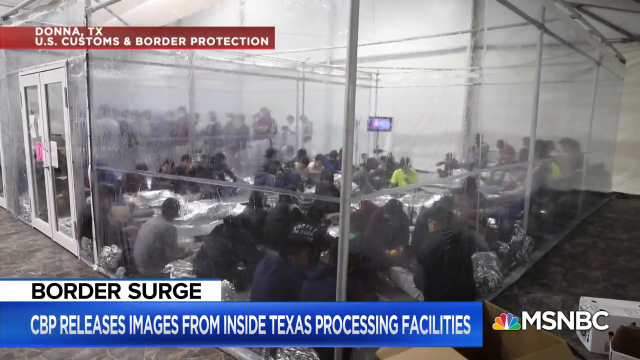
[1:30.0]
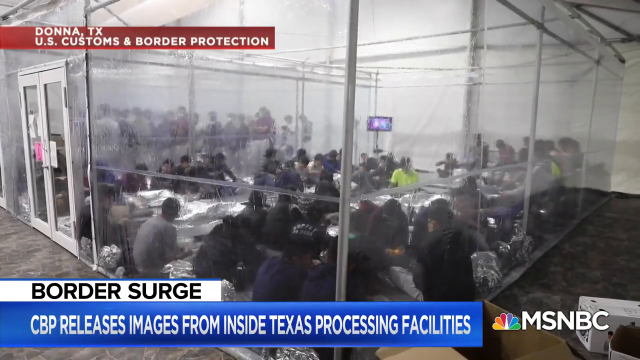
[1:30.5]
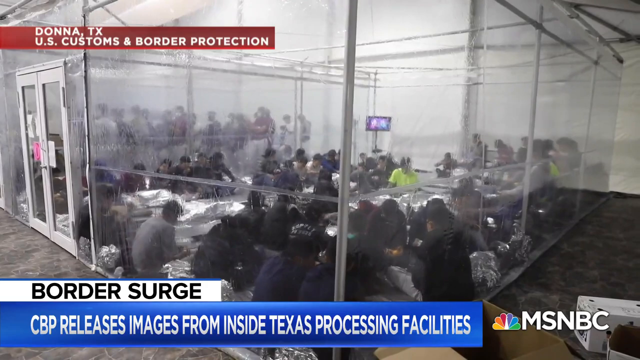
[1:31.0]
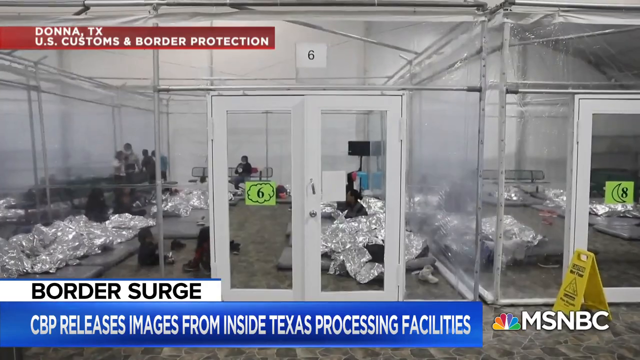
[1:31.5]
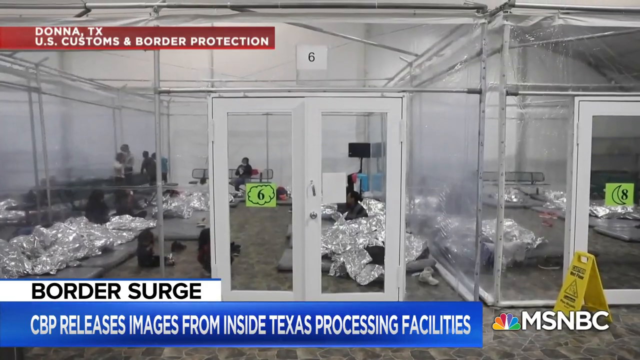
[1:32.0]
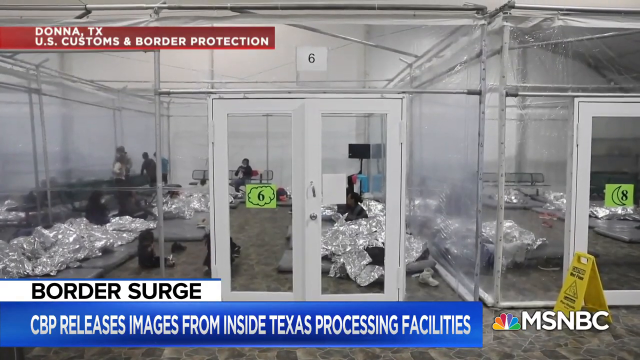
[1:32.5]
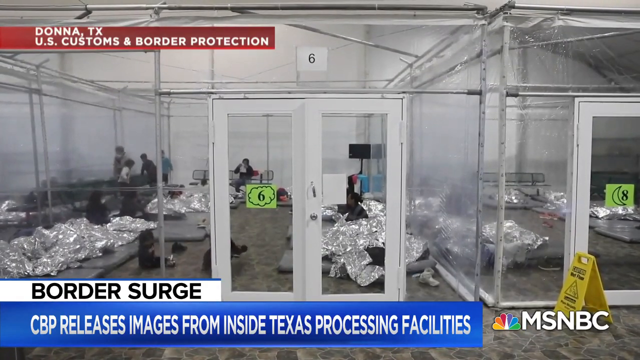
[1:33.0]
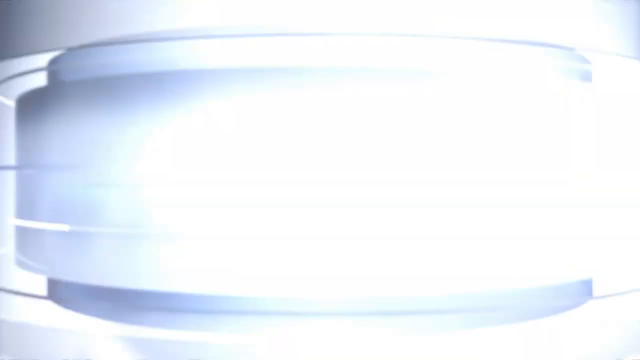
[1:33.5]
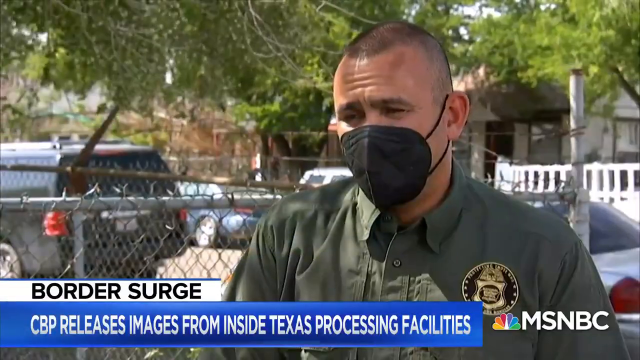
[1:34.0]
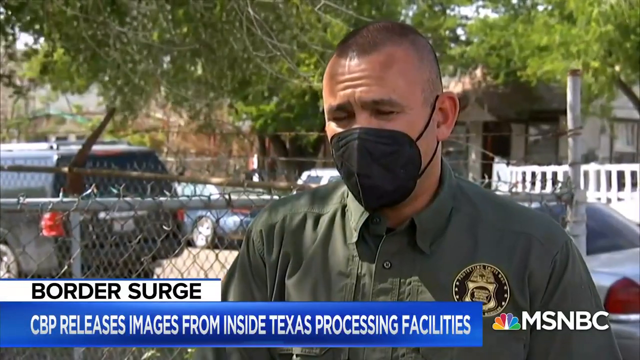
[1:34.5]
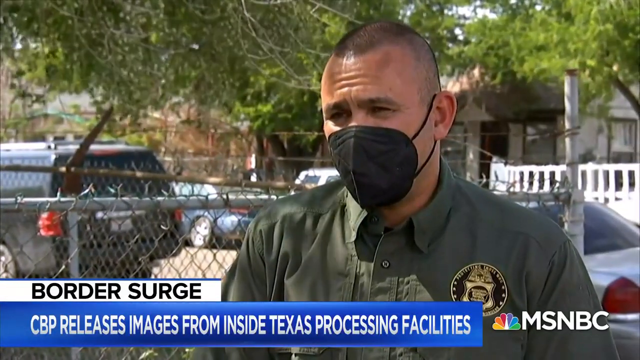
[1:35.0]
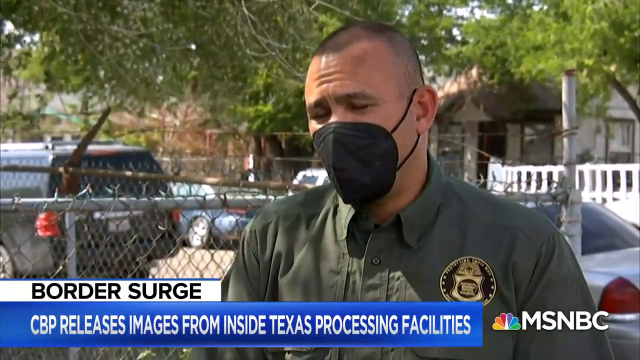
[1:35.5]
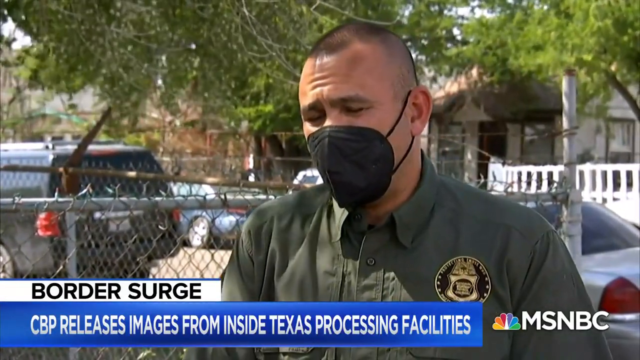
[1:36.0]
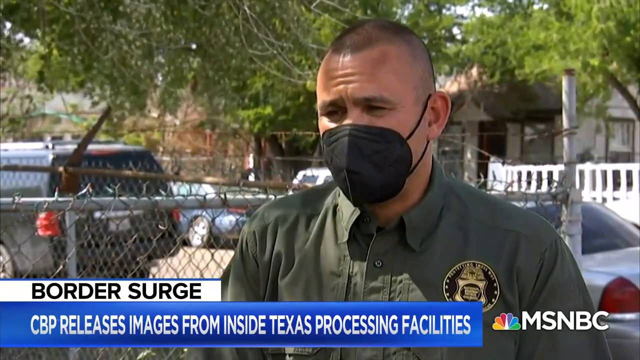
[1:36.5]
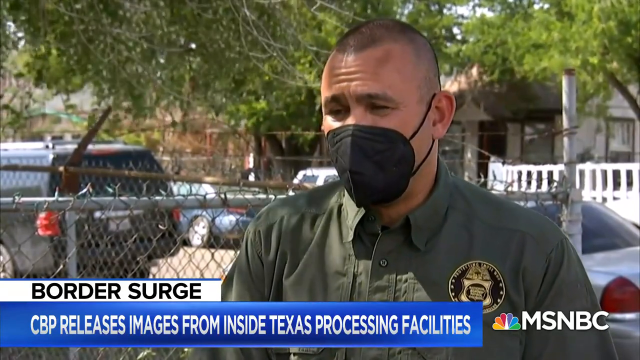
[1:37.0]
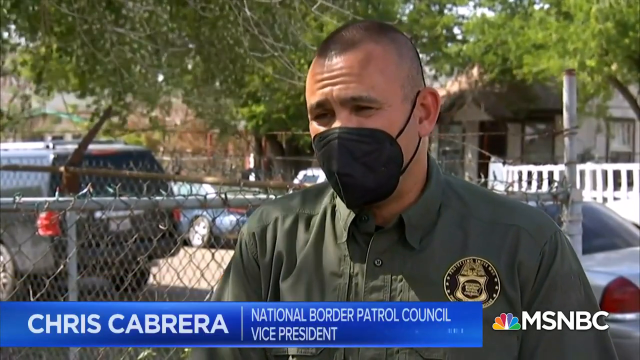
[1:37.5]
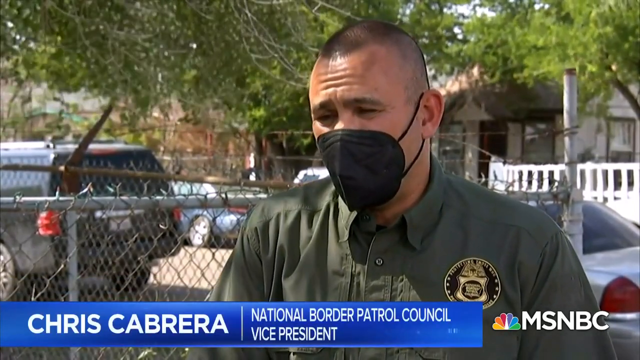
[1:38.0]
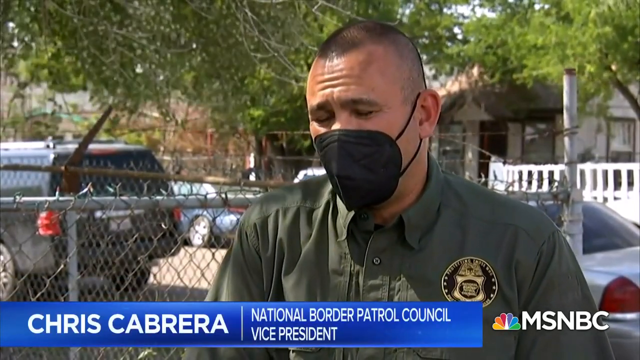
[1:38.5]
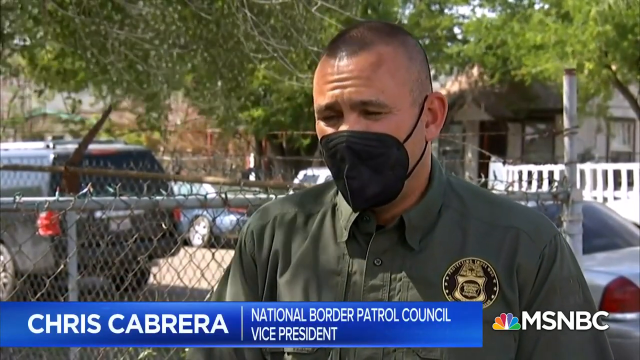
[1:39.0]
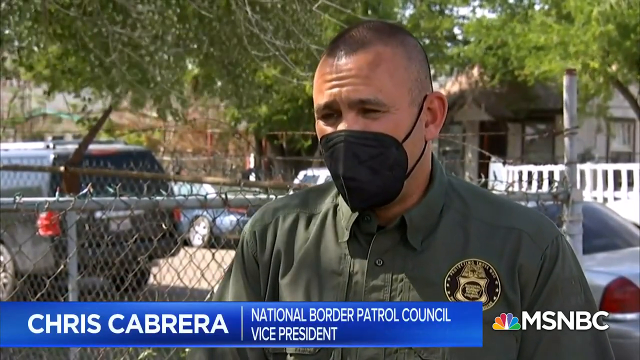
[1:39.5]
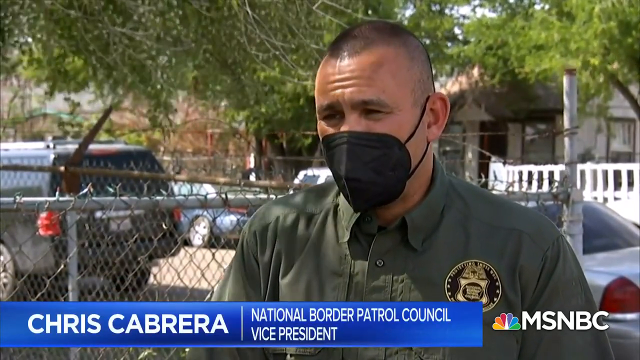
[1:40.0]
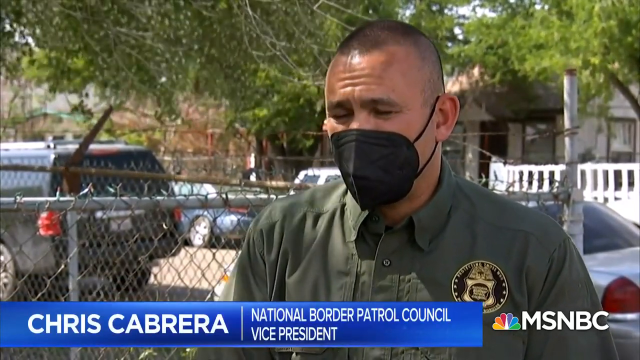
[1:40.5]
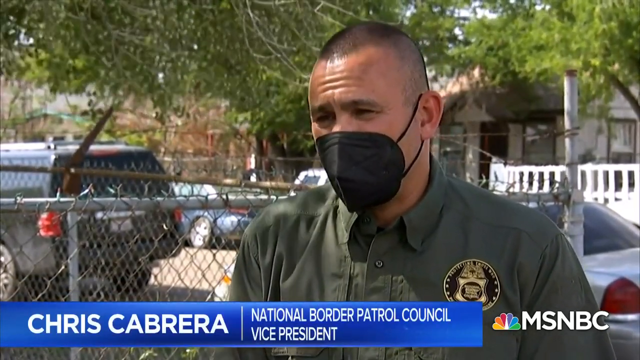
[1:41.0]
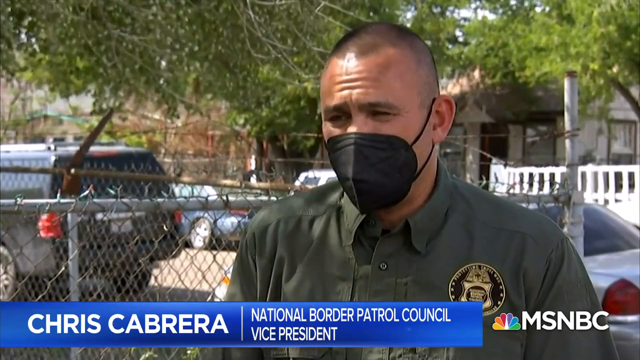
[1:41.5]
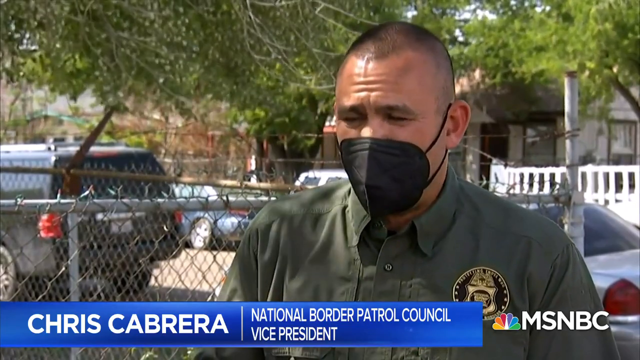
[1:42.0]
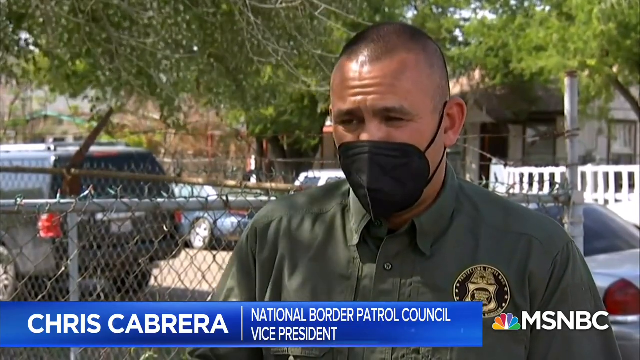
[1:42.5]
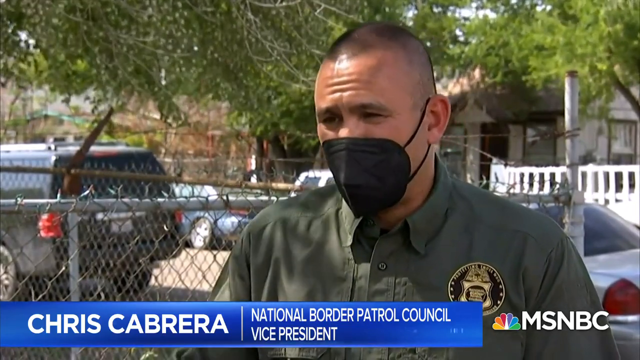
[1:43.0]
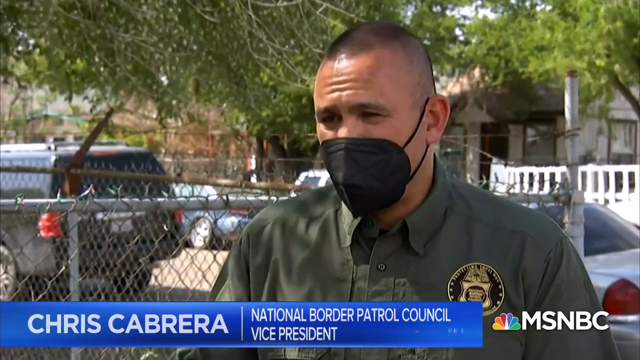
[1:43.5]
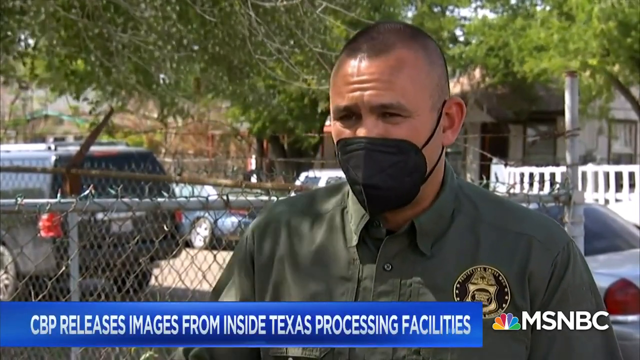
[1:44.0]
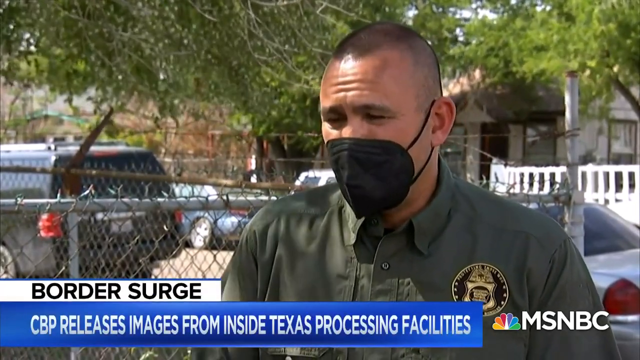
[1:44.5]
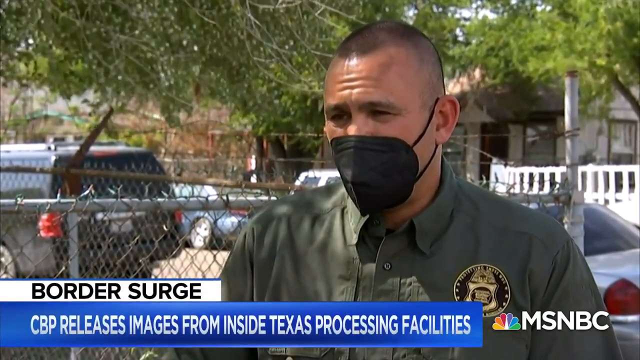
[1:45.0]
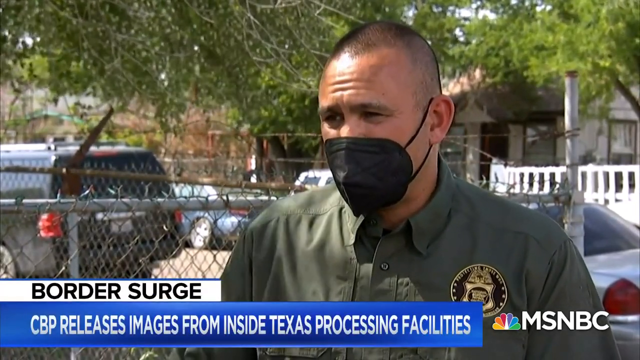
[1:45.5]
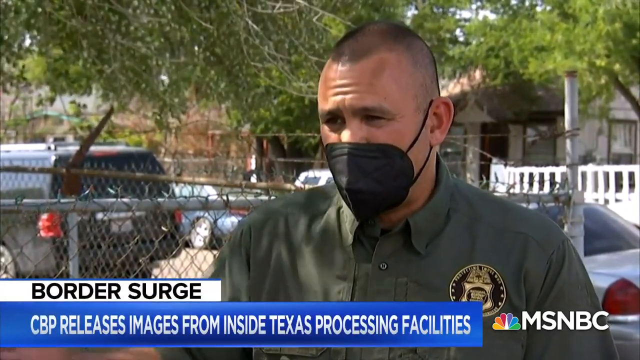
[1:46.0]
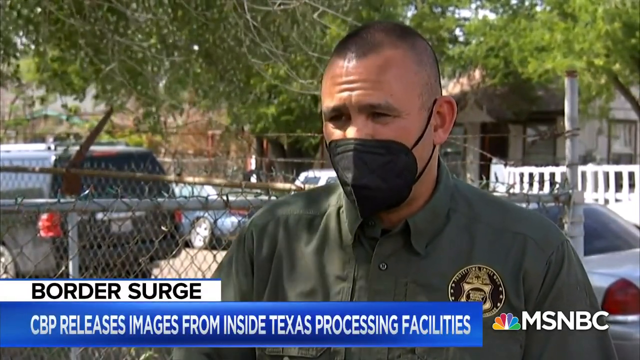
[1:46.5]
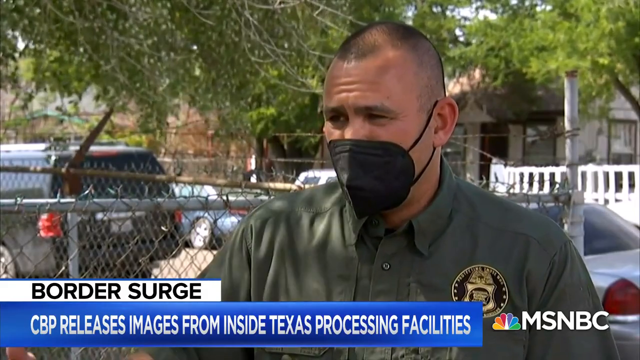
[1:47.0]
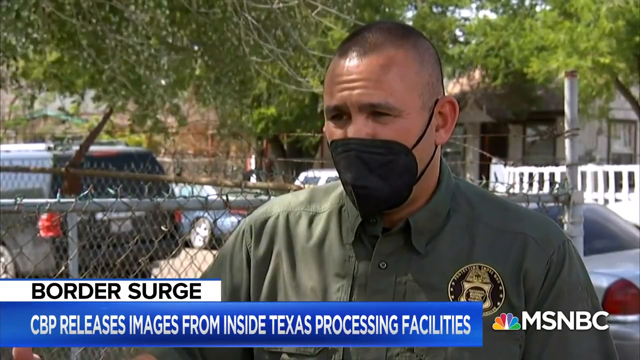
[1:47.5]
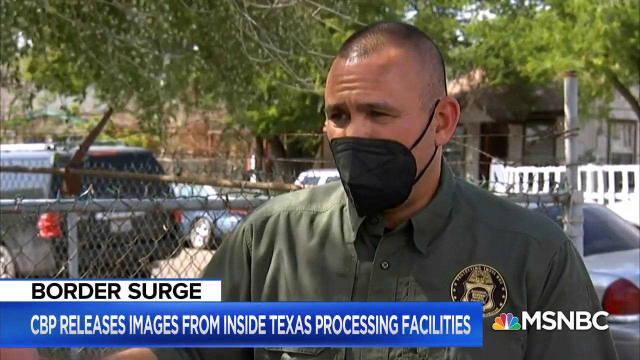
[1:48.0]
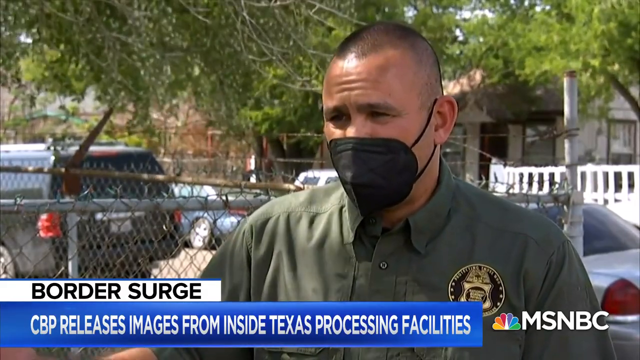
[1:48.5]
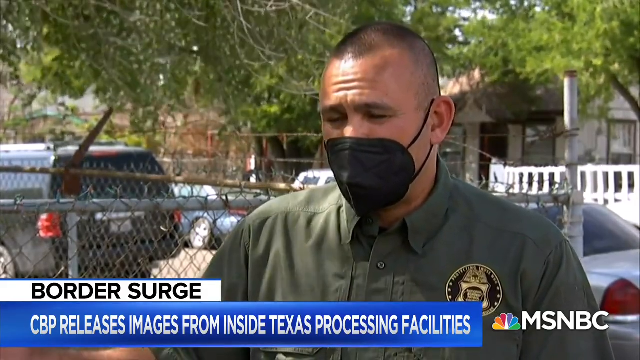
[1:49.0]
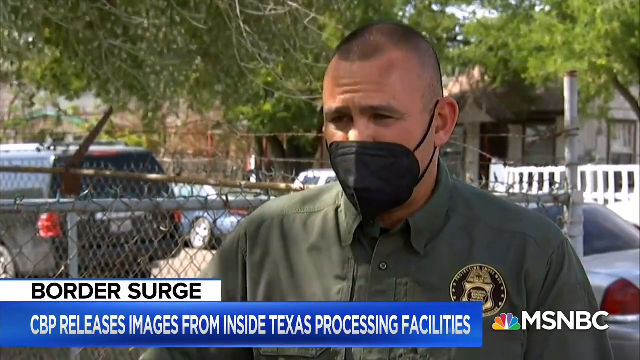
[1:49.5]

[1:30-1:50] The video returns to the room that almost looks like a greenhouse, with walls that can be seen through and several people sitting at tables inside. A different angle of the same see-through wall shows a number six above one door, probably the room number. The video then moves outside to a man who appears to be possibly a border control officer, wearing a green shirt with a patch on his left chest and a black mask; he appears to be speaking into the camera. Behind him are trees, a fence, and what looks like a parking lot with cars parked. A graphic reading "border surge" pops up in the lower left corner.